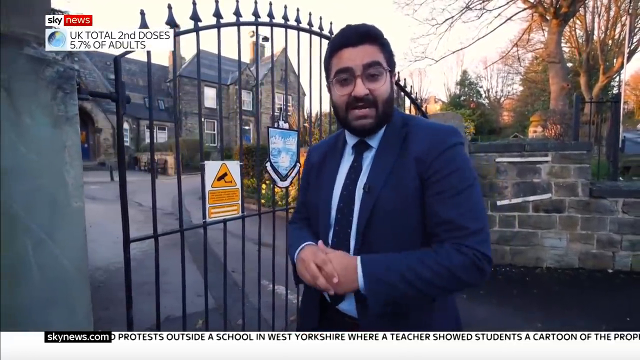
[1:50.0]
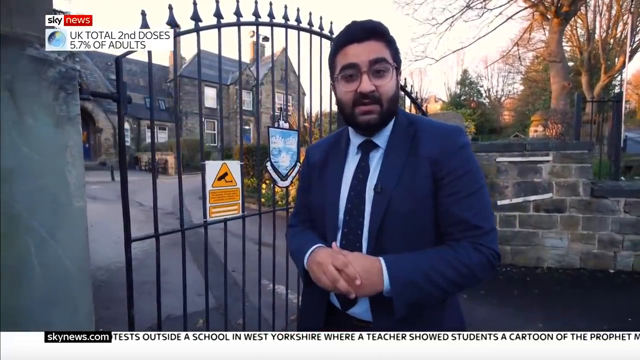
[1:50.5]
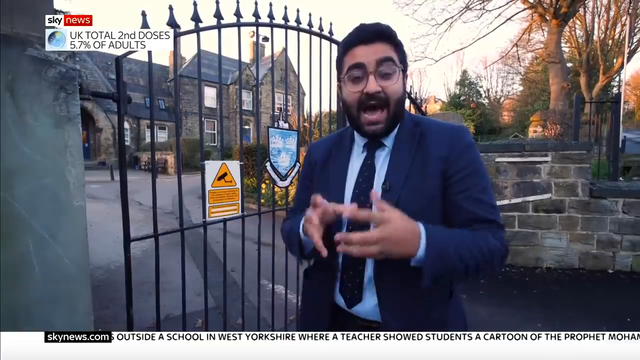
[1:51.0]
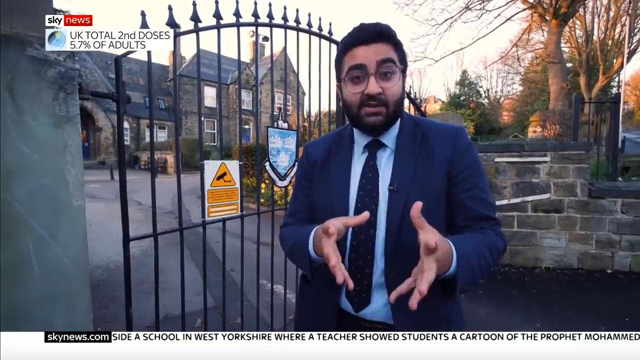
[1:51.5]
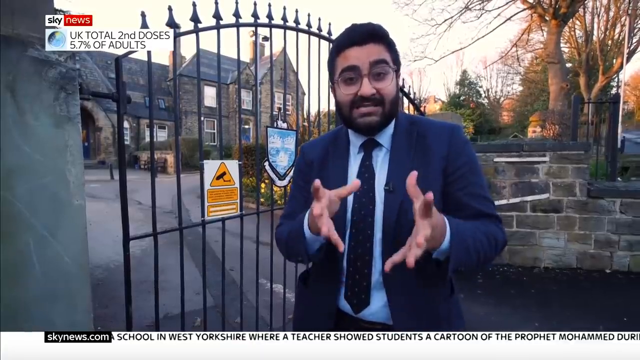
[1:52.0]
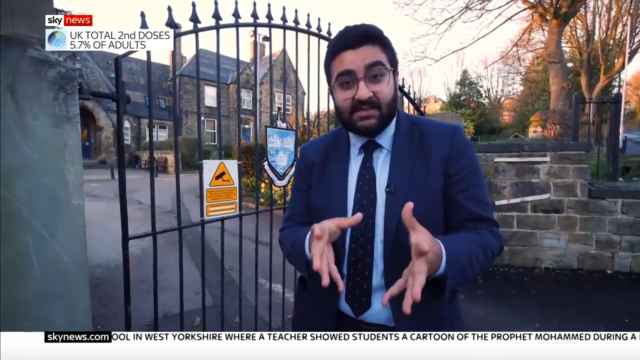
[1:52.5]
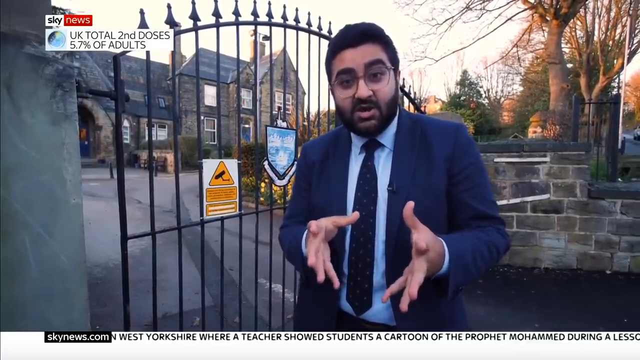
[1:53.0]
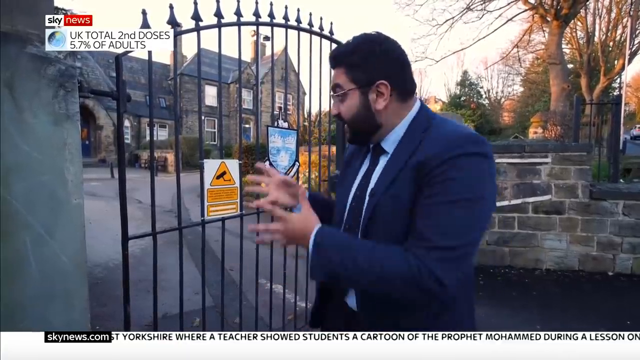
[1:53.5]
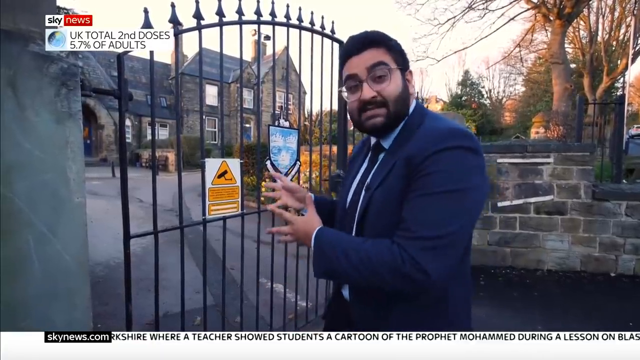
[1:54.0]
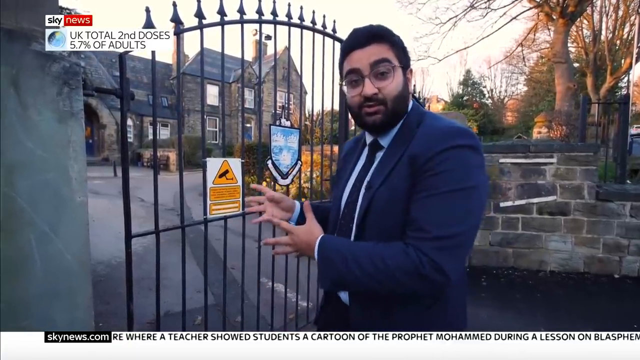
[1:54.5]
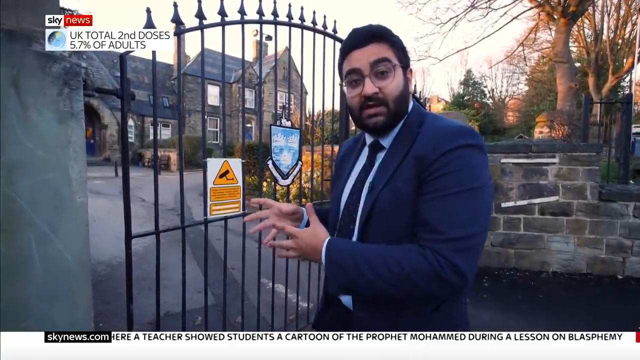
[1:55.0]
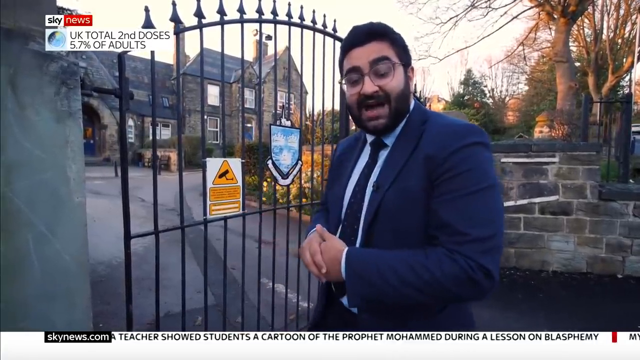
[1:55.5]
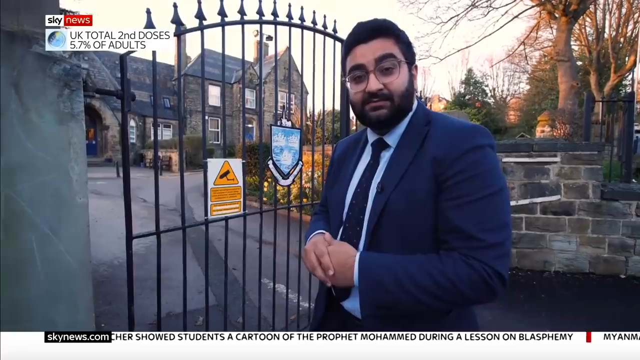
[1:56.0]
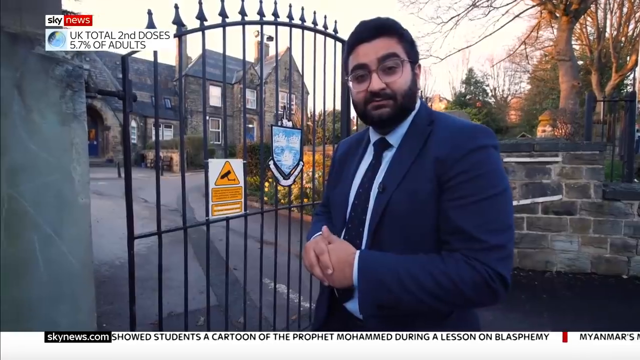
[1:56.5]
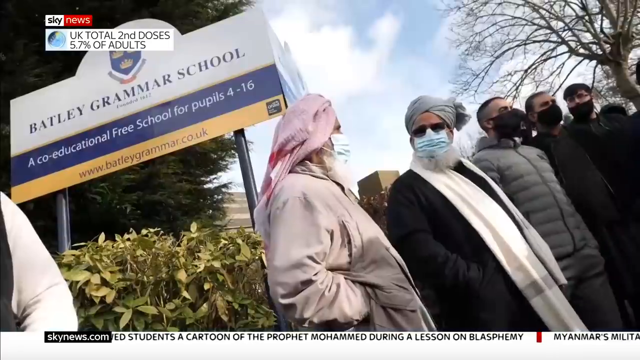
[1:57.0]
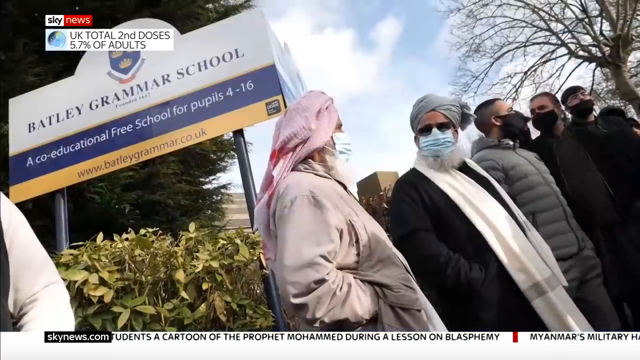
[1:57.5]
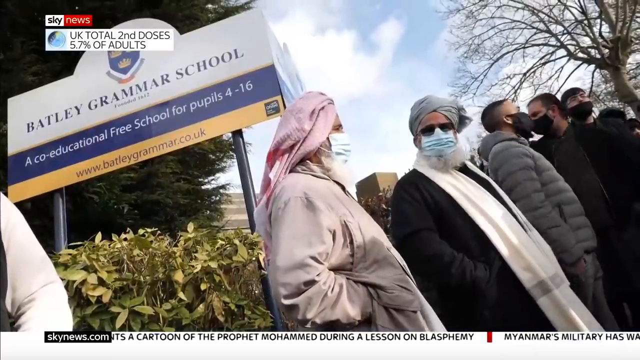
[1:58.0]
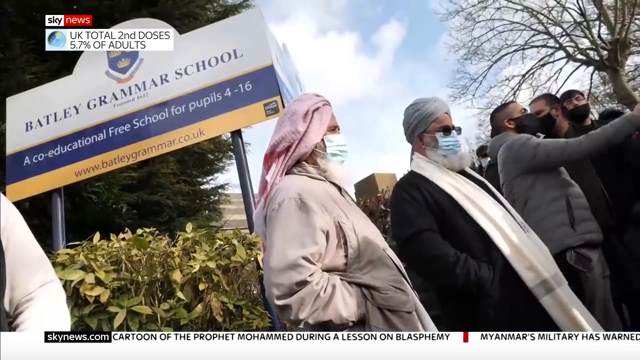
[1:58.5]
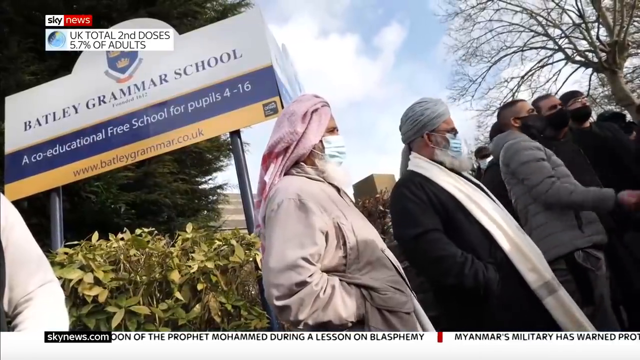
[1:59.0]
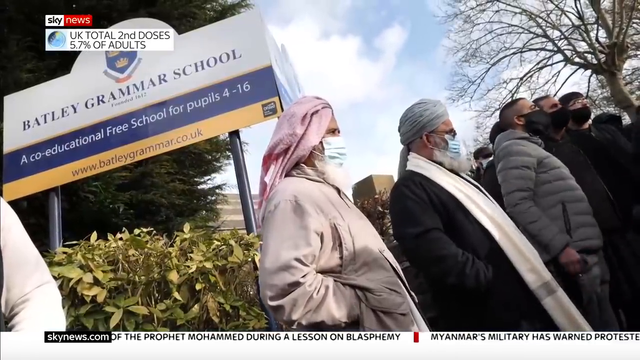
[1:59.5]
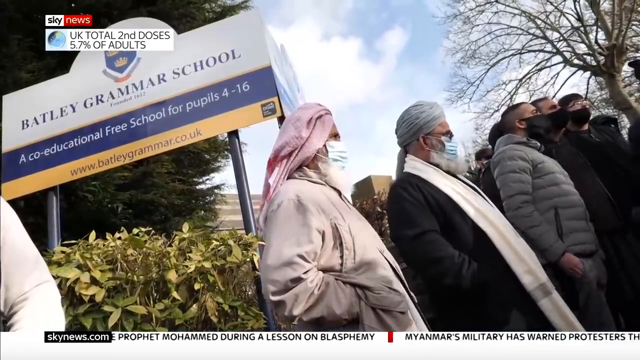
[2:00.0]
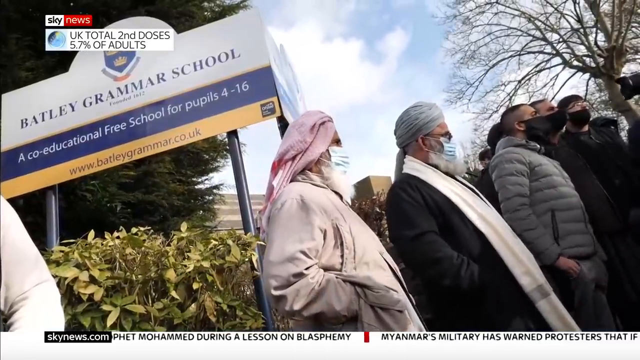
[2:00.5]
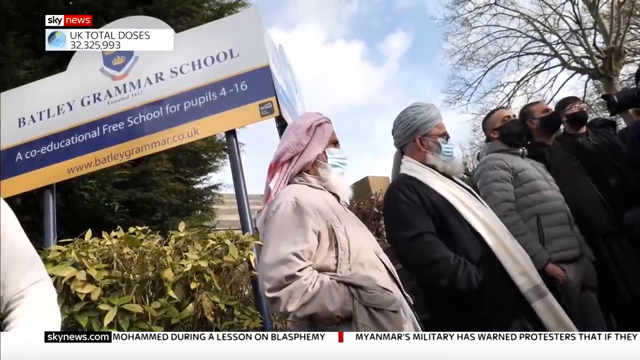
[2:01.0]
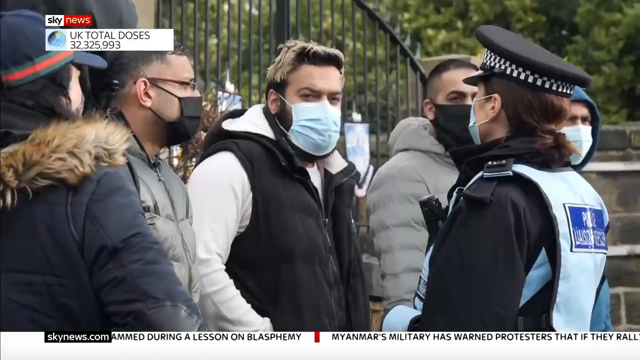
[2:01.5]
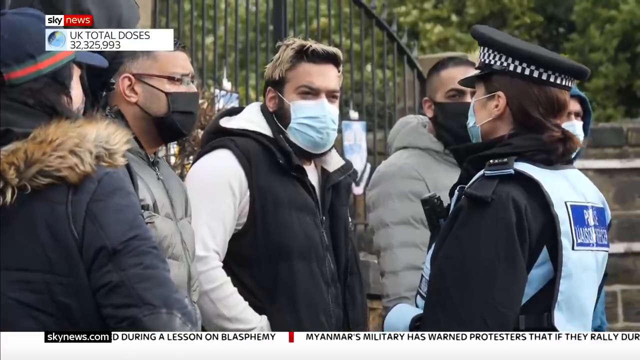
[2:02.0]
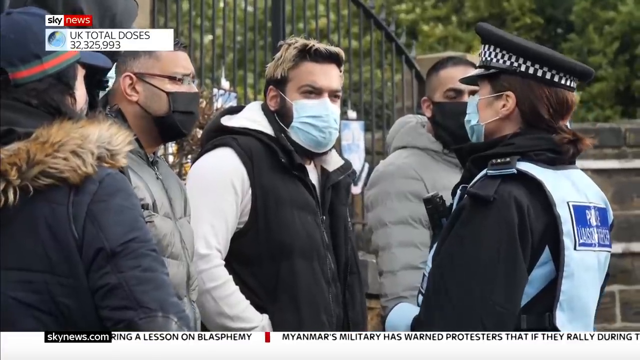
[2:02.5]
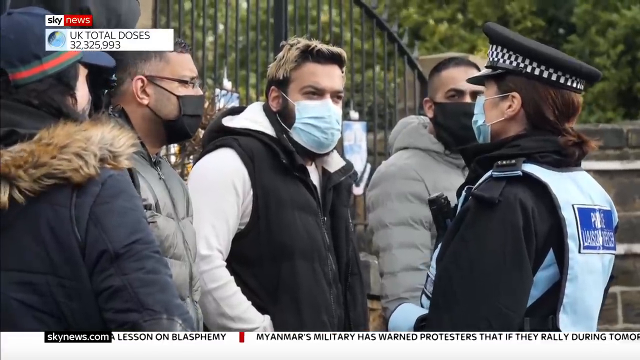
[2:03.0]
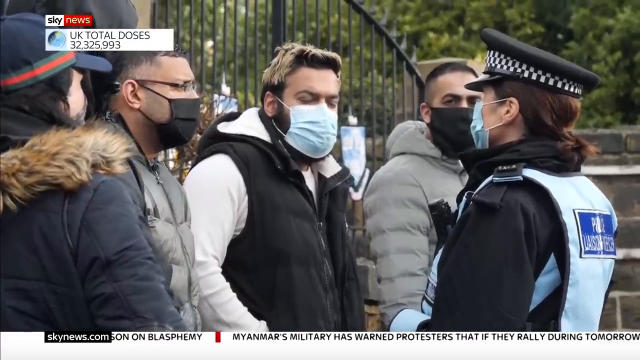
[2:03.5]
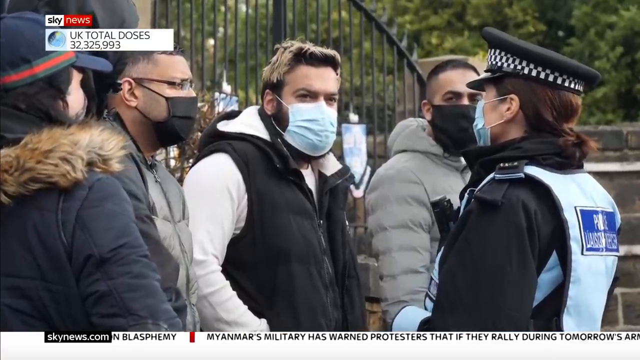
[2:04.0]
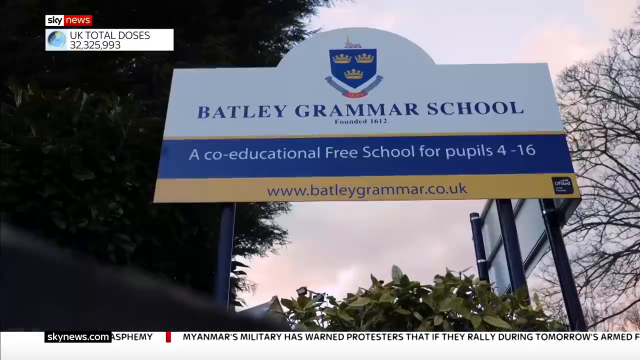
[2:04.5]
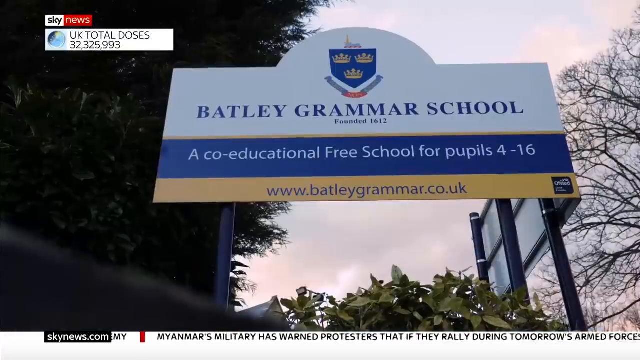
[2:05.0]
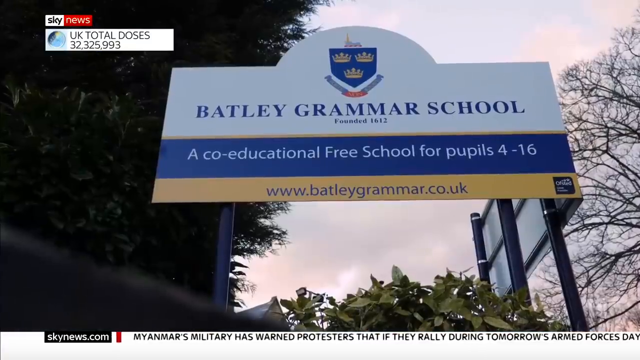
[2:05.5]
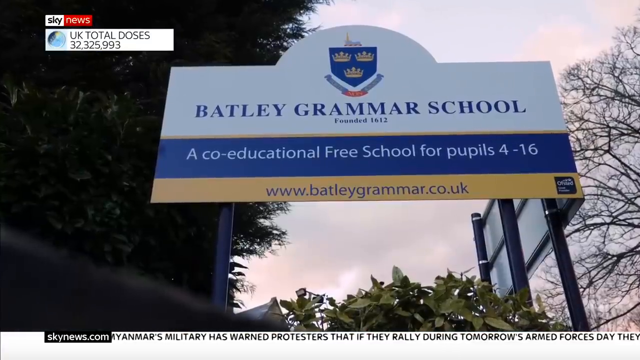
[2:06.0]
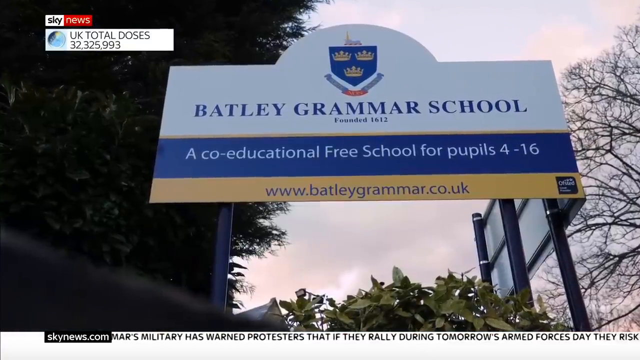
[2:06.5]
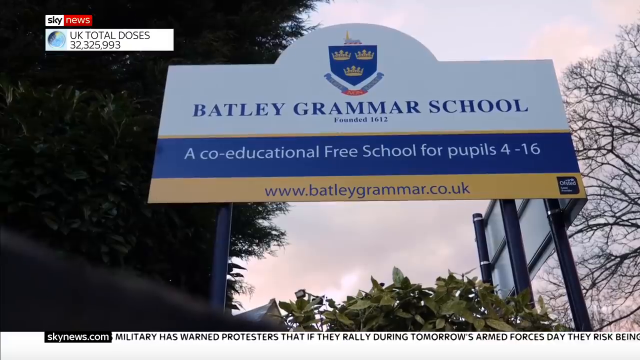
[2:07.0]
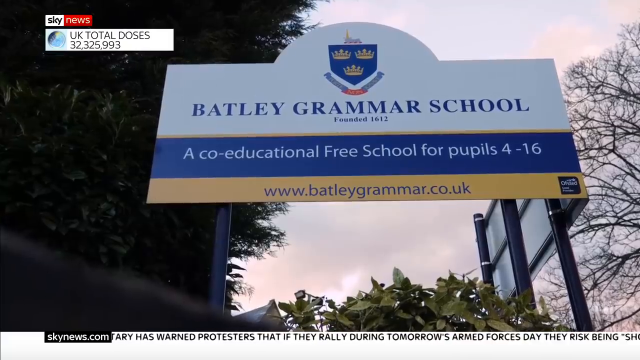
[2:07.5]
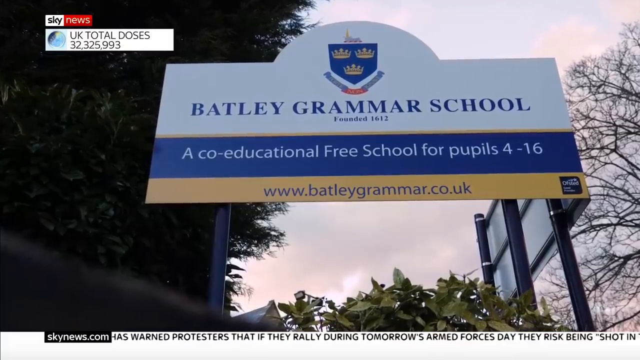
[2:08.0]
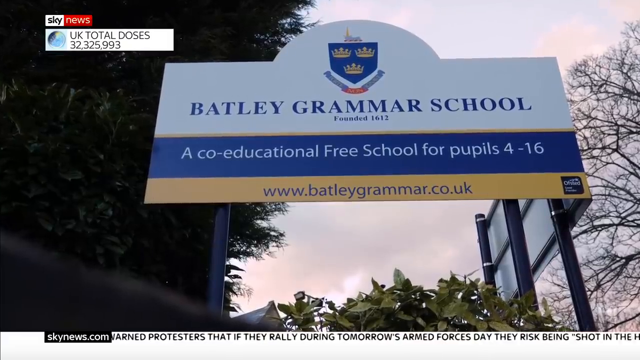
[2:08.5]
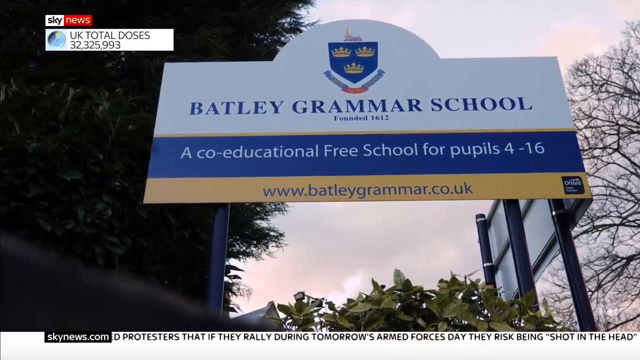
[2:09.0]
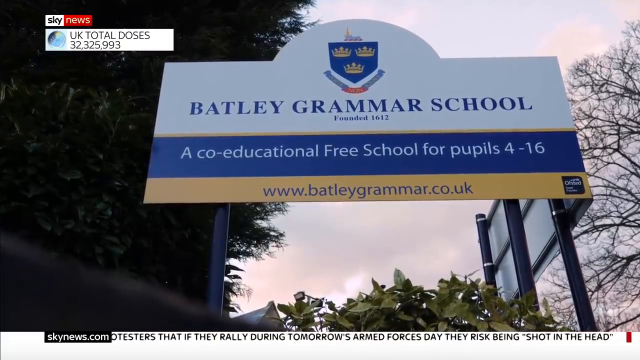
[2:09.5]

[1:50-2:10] The Sky News broadcast about COVID-19 shows "UK total second dose 5.7% of adults" and the Sky News logo. A man in a navy blue suit, black tie and glasses stands in front of the school gate, which is closed with chains; the school looks abandoned. He talks while looking at the school, points at the gate, then looks at the camera. The footage returns to Bartley Grammar School, showing the poster and people in a line wearing masks. The poster reads "free school for pupils 4 to 16 www.berkeleygrammar.co.uk". There are flowers, and people wear heavy clothing, though the sky is blue and slightly cloudy with white clouds. A tree has no leaves, only branches. A man in a gray coat points at the camera, and a camera is visible. A female police officer converses with a group of young men.